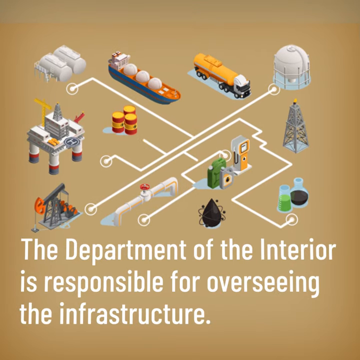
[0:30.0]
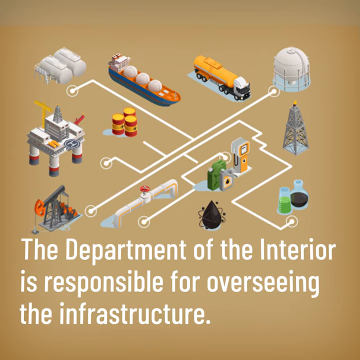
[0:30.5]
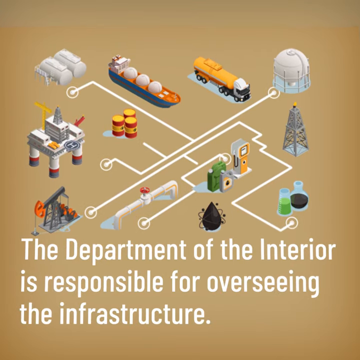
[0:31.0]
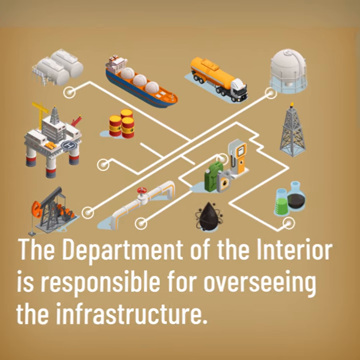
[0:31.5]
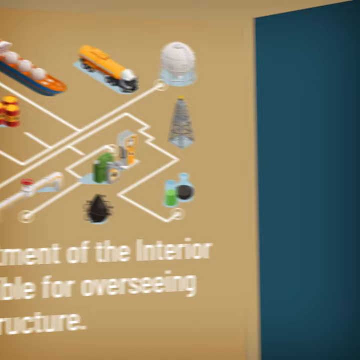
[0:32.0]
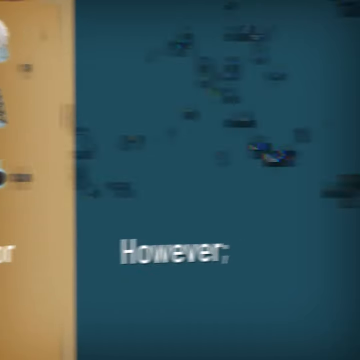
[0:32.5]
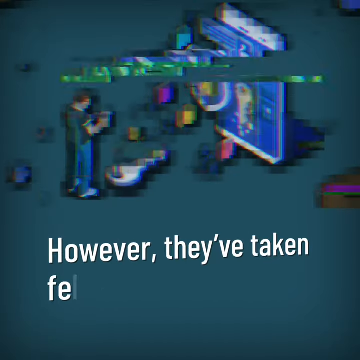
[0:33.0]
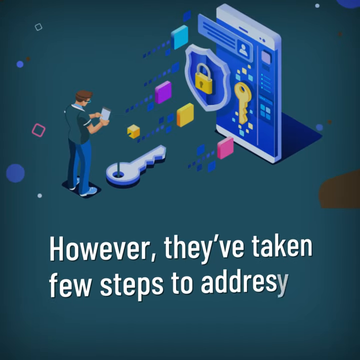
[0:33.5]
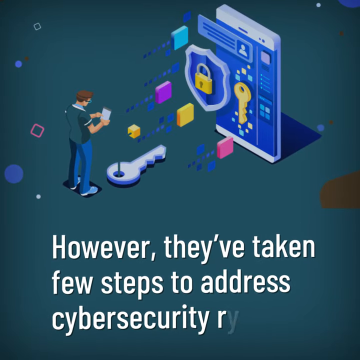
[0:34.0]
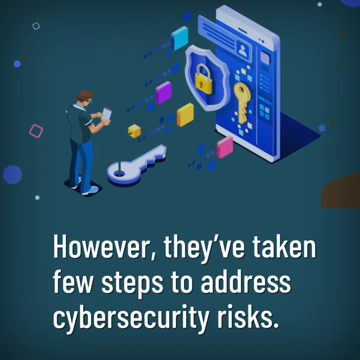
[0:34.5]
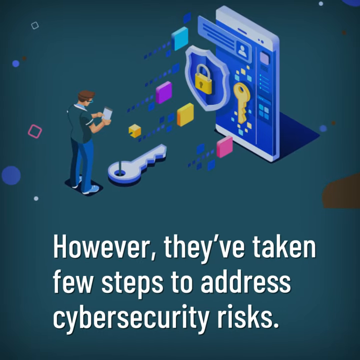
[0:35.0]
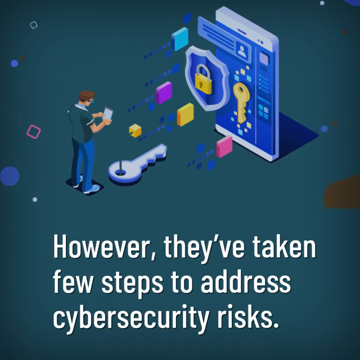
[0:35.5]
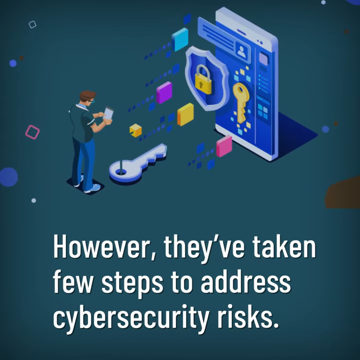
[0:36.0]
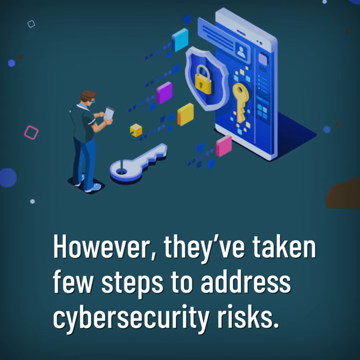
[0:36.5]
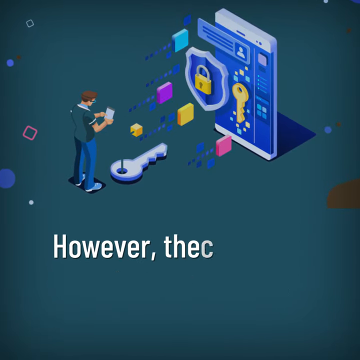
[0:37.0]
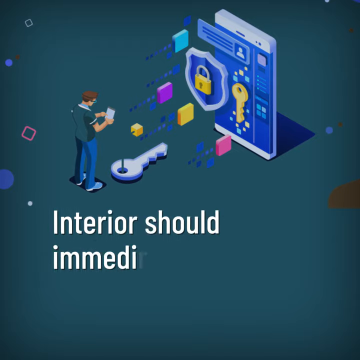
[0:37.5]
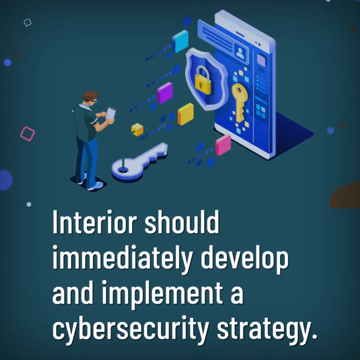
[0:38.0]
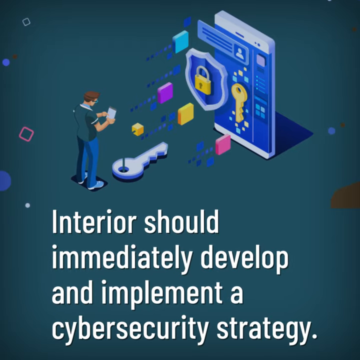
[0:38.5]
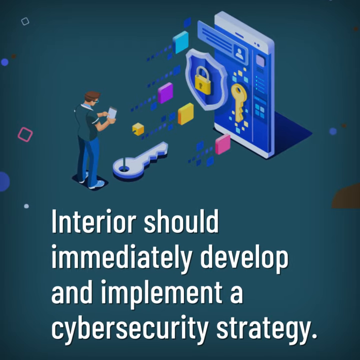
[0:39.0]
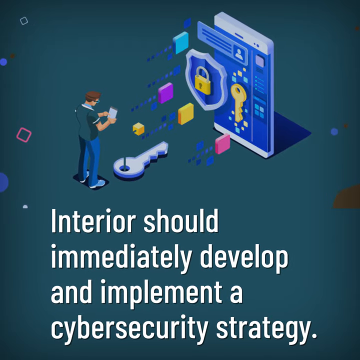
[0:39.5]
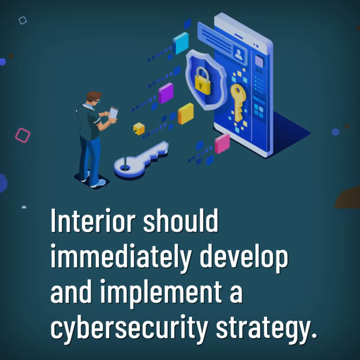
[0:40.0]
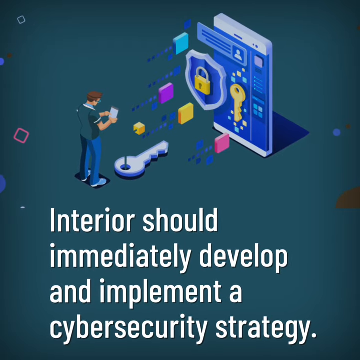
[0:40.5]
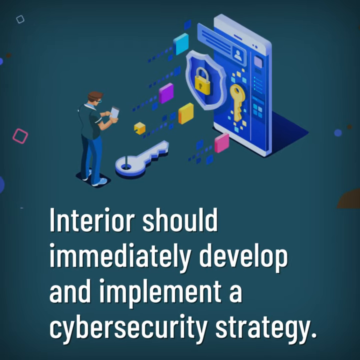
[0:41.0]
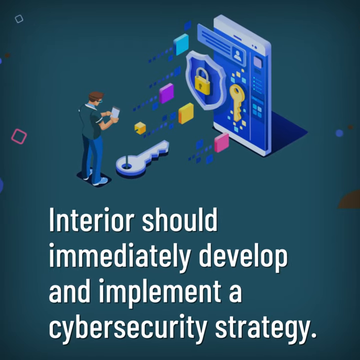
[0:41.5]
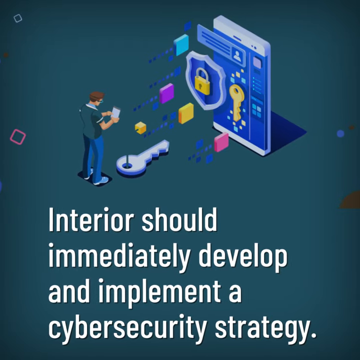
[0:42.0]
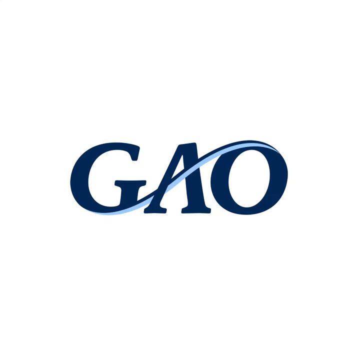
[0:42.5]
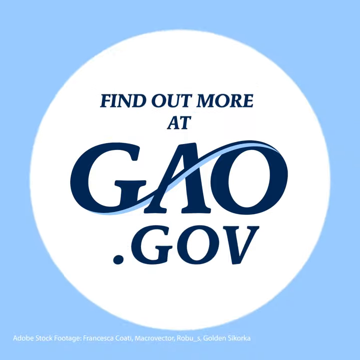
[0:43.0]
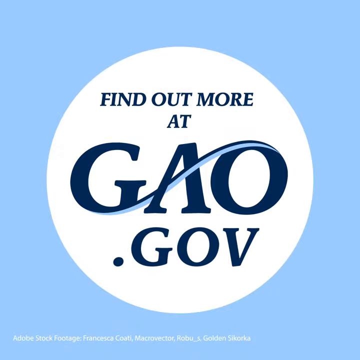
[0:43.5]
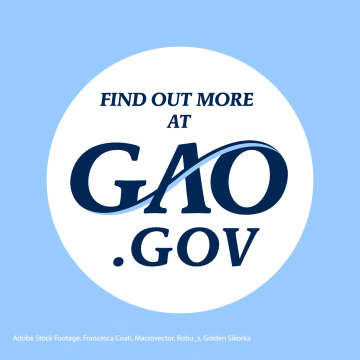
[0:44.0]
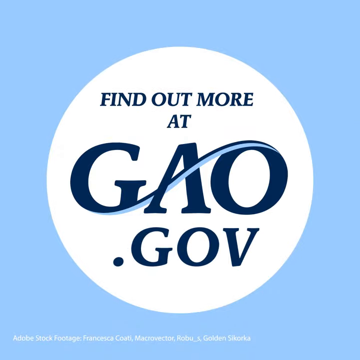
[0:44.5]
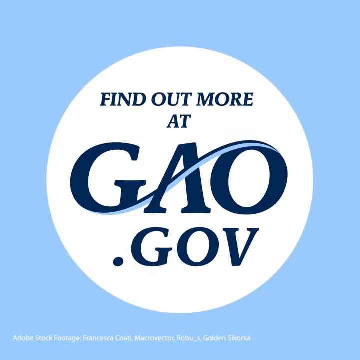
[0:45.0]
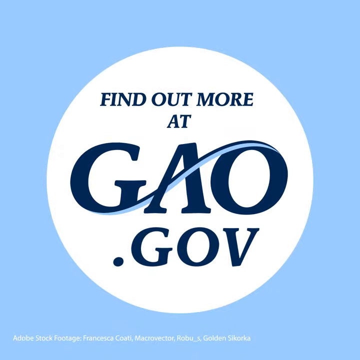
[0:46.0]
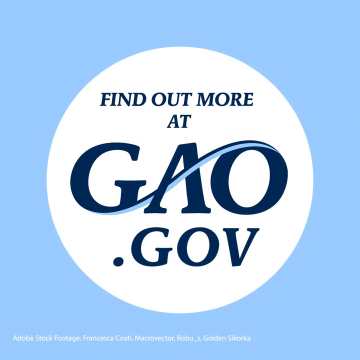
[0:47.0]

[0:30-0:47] The text "the Department of the Interior is responsible for overseeing the infrastructure" continues, with a bunch of oil barrels, an oil rig, some sort of big tower, some trucks, some oil tankers, some sort of nuclear-looking equipment and some chemistry. It then switches to text saying "however they've taken a few steps to address cyber security risks." A man sits with a tablet in front of a key and a bunch of locks, apparently penetrating their defenses. Text reads "Interior should immediately develop and implement a cyber security strategy." It concludes with "find out more at gao.com." The video moves very quickly between different concepts.